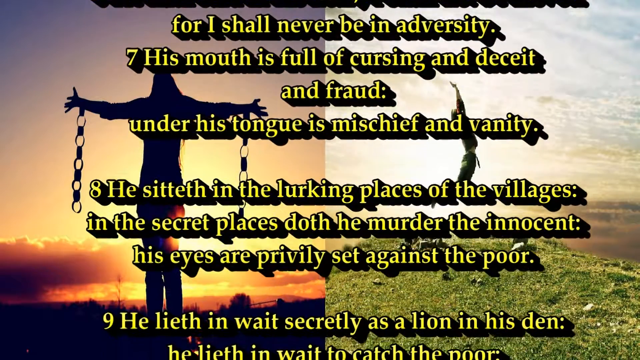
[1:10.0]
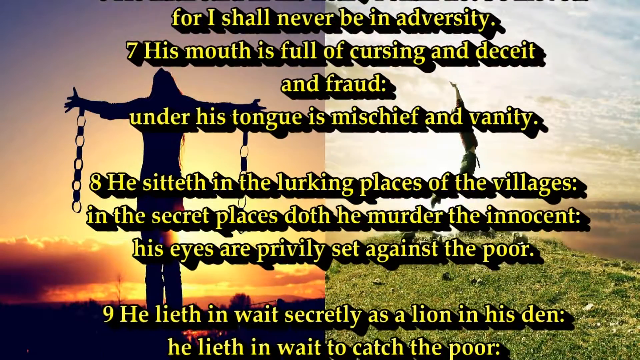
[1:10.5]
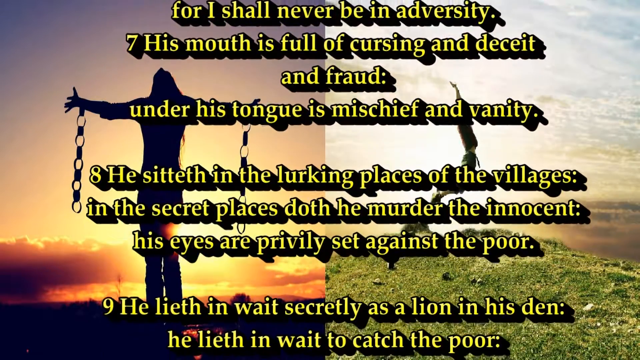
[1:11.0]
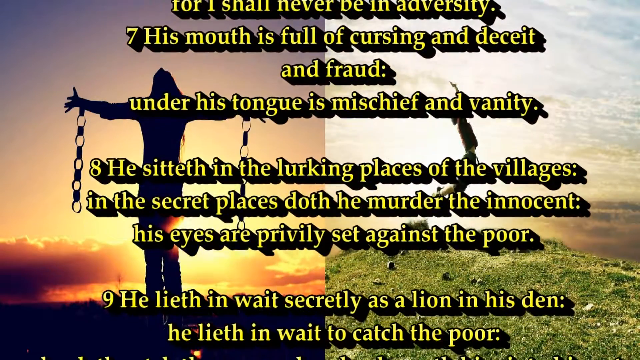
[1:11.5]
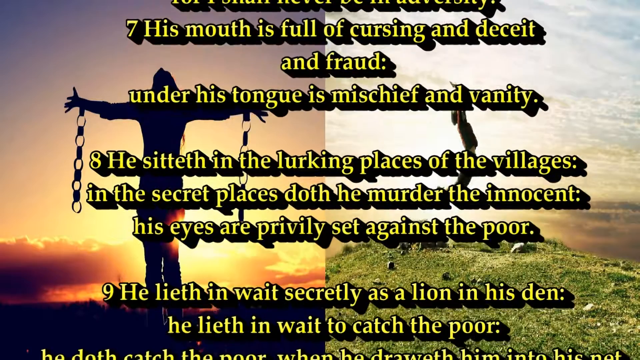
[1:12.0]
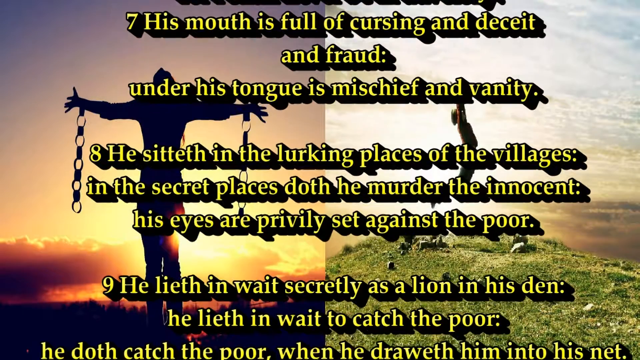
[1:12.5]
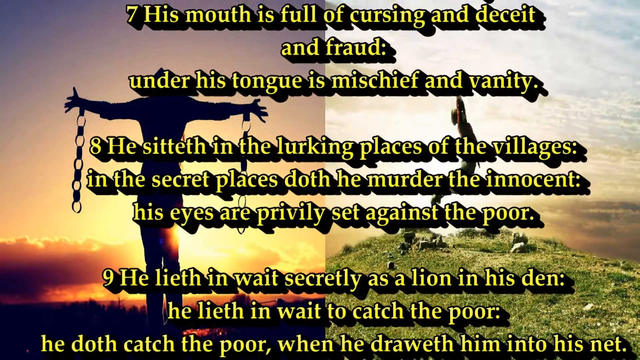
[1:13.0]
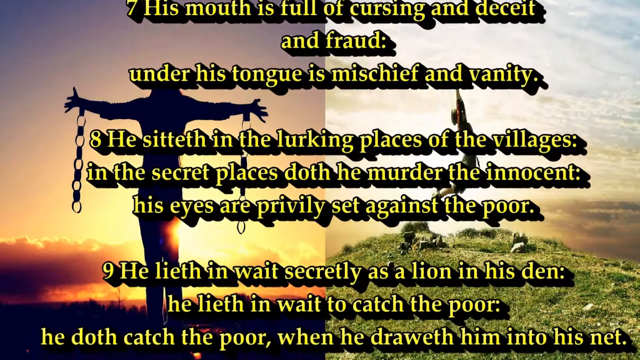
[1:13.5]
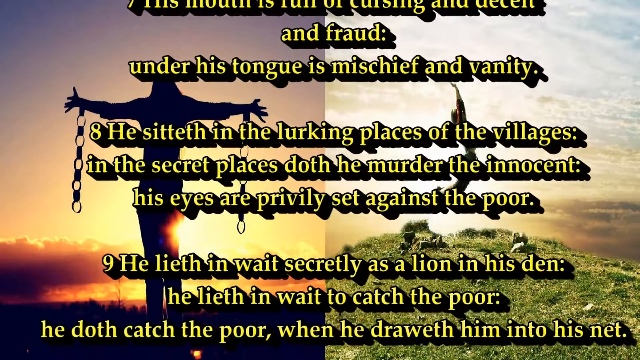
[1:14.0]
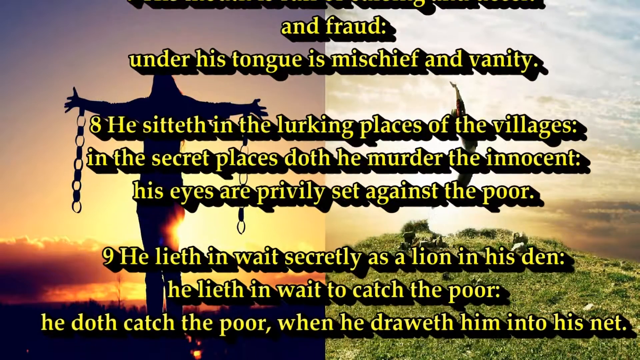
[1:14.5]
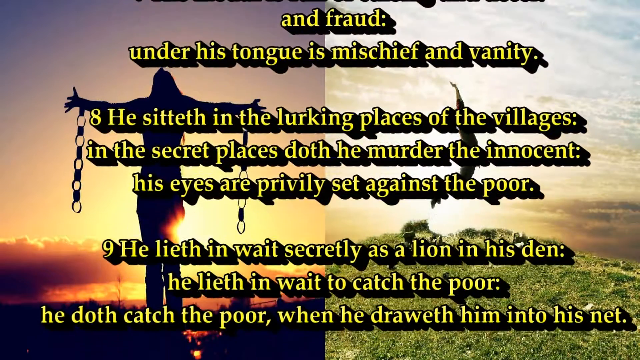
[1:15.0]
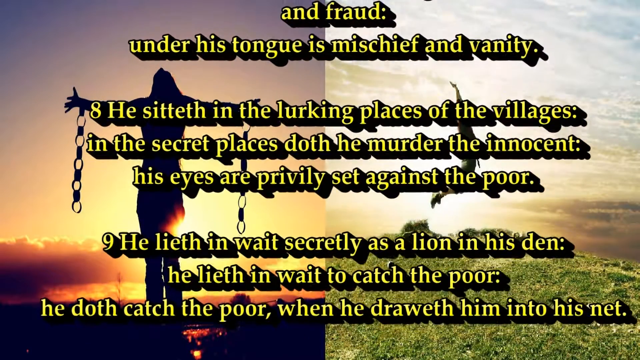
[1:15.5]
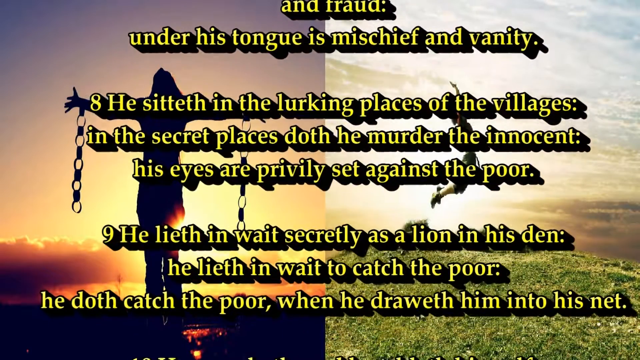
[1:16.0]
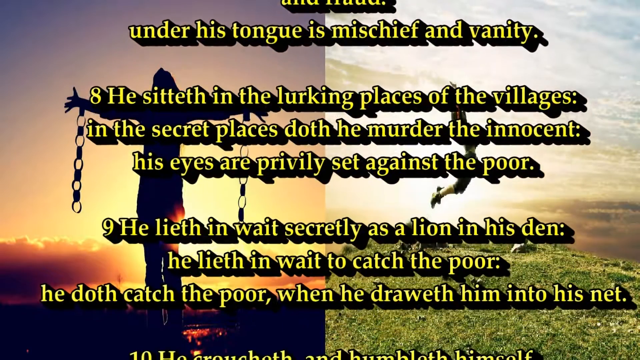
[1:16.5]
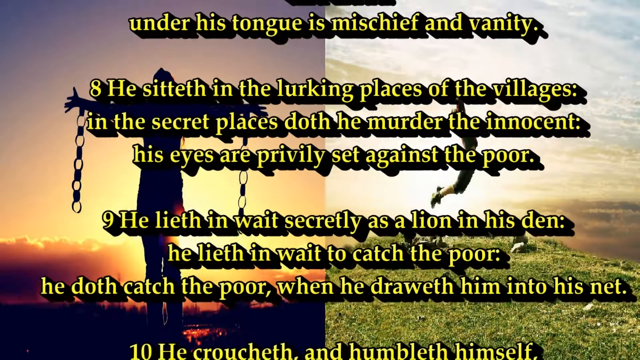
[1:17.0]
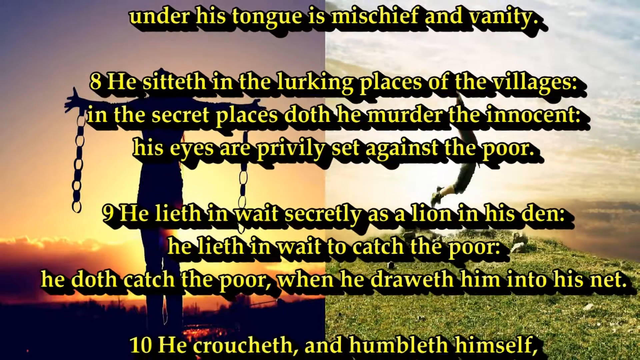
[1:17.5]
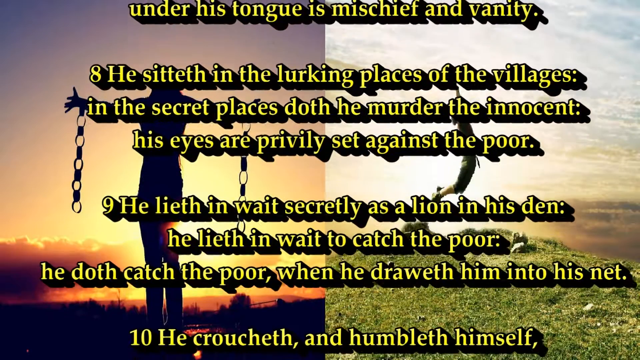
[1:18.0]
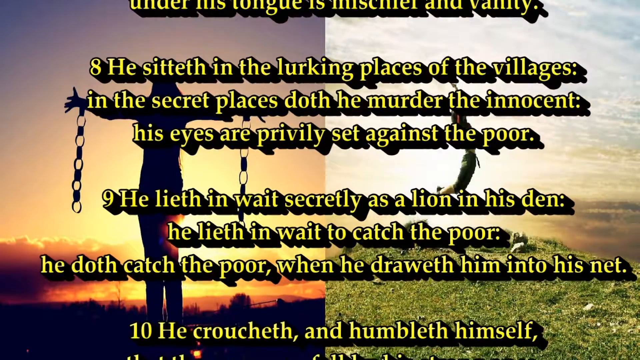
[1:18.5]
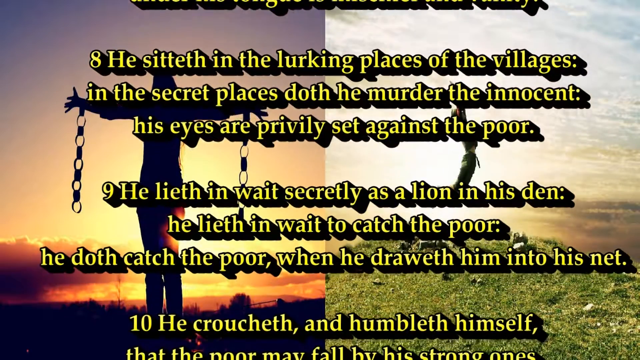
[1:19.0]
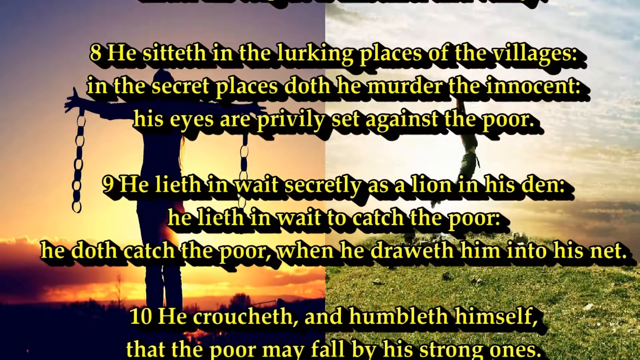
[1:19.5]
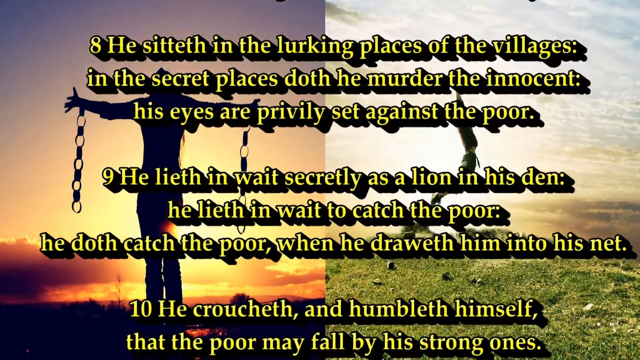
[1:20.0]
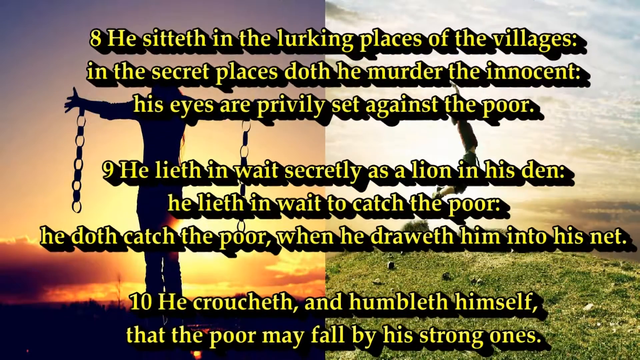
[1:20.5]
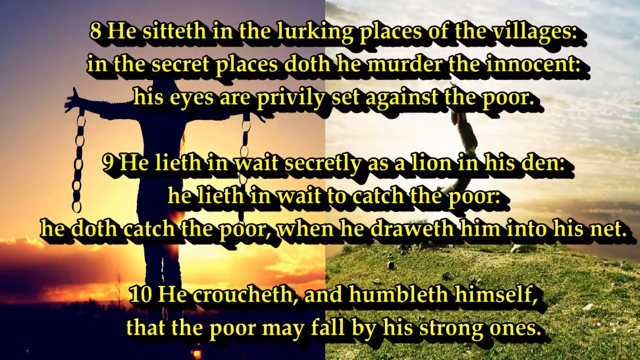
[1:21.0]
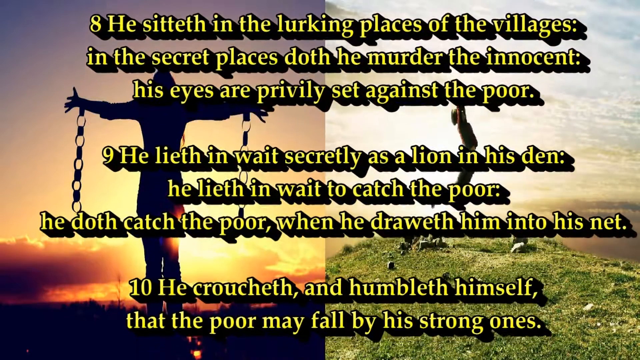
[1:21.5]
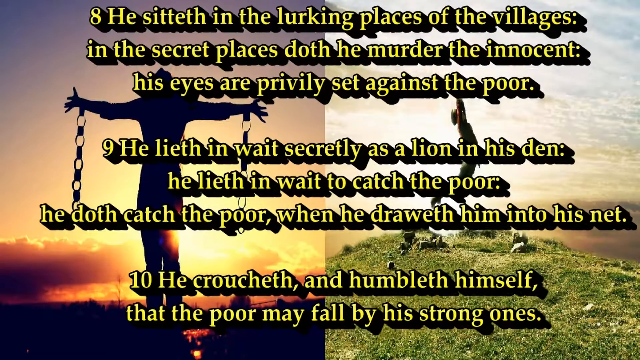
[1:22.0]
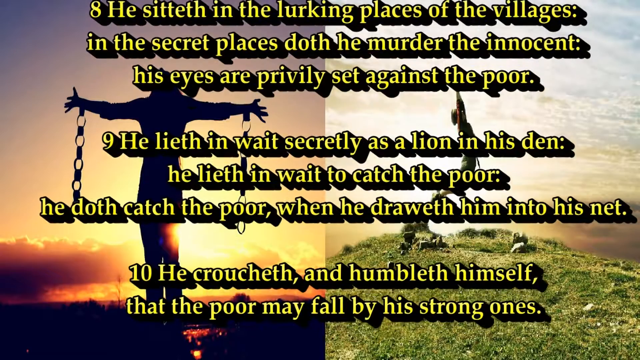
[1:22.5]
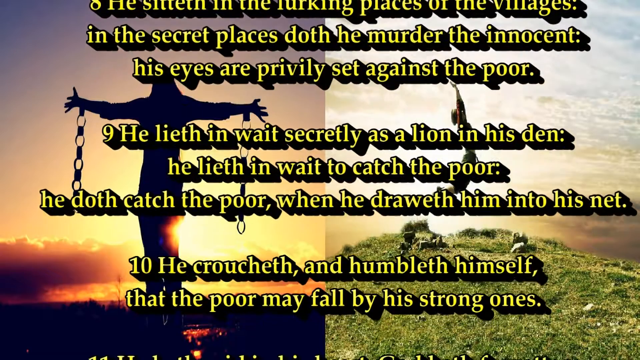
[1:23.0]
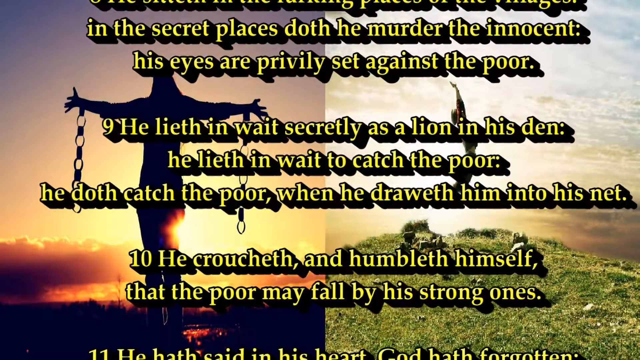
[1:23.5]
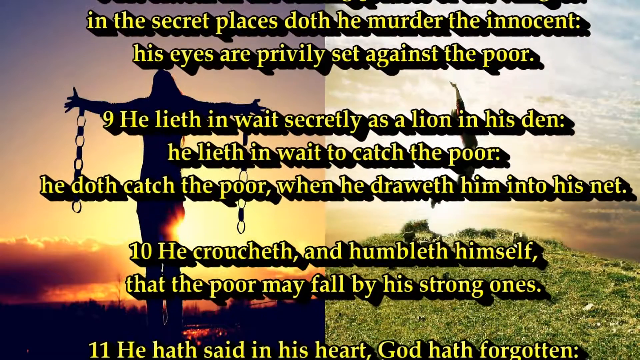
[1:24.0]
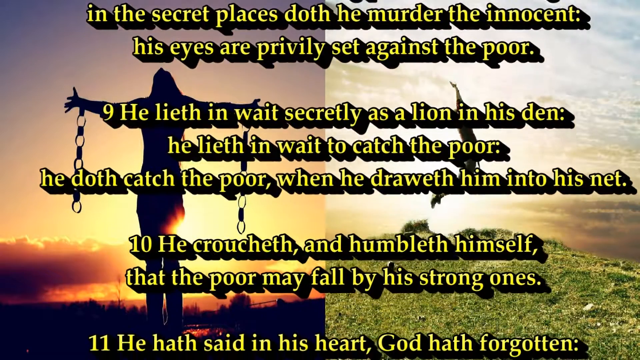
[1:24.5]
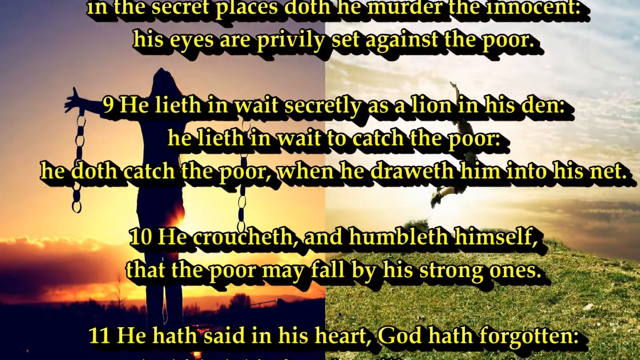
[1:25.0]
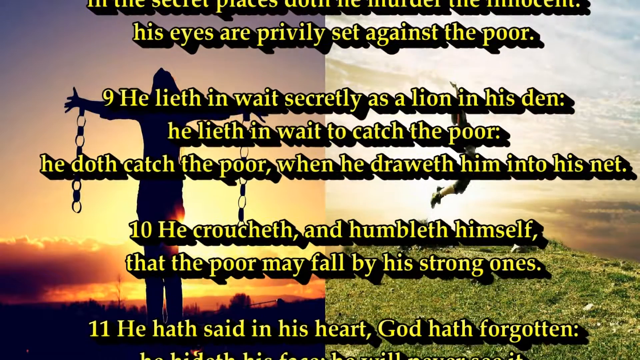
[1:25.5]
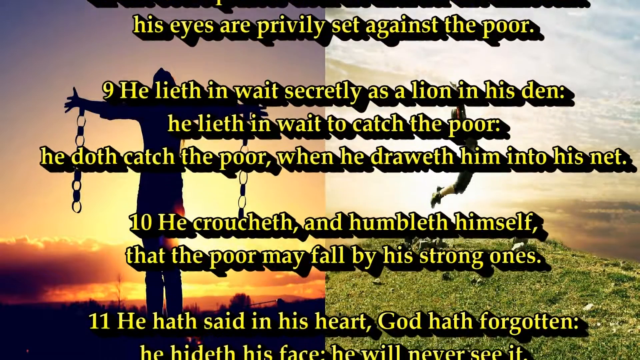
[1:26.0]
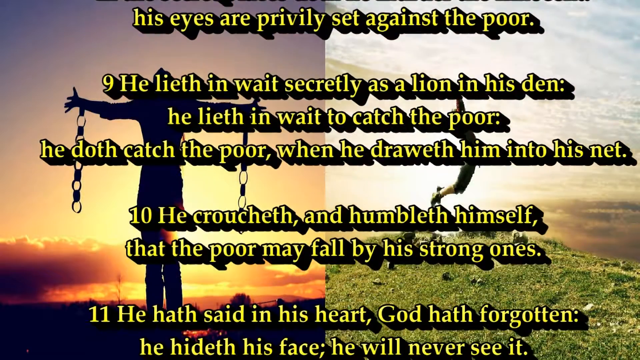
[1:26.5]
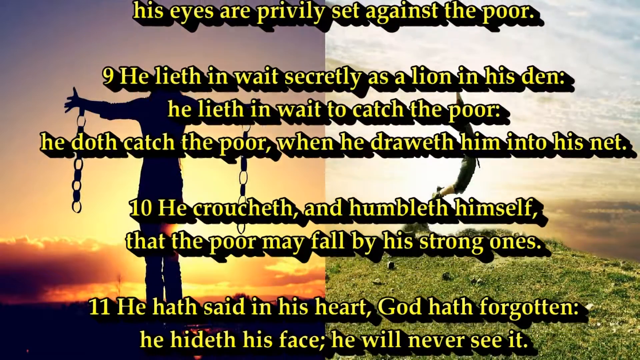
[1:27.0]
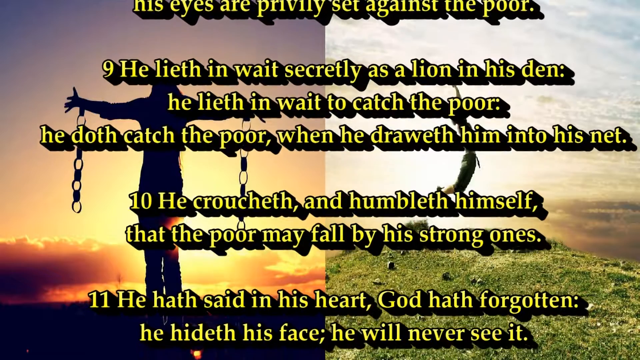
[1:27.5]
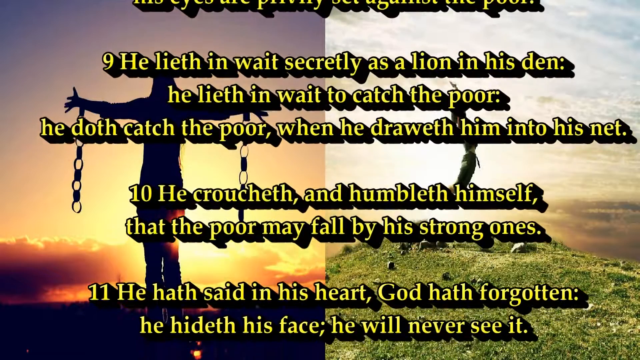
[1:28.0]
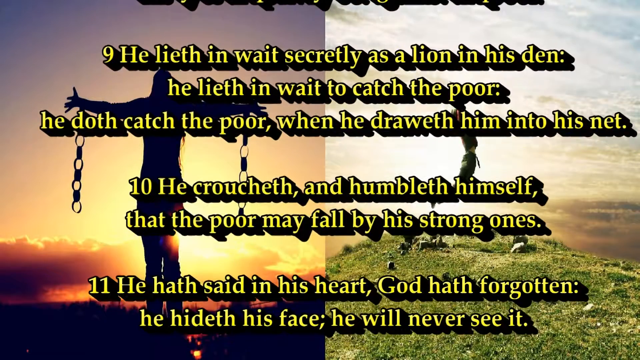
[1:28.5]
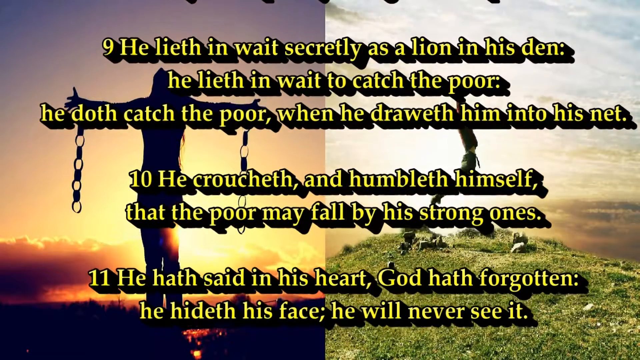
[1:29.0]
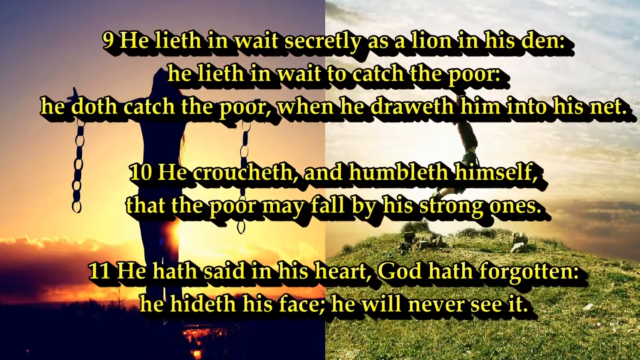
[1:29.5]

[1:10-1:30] The verses are numbered 7, 8, 9, 10 and 11. Verse 7 has three lines, verse 8 has three lines, as does verse 9, verse 10 has two lines and verse 11 has two lines as well, all written in yellow. The background consists of two pictures: one looks like a person who was chained, with the chains now broken, and in the other a person is jumping while standing on the hill. Verse 7 reads "His mouth is full of cursing and deceit and fraud. Under his tongue is mischief and vanity." Verse 8 includes "he murdered the innocent. His eyes are privily set against the poor." Verse 9 reads "He lied in wait secretly as a lion in the den."